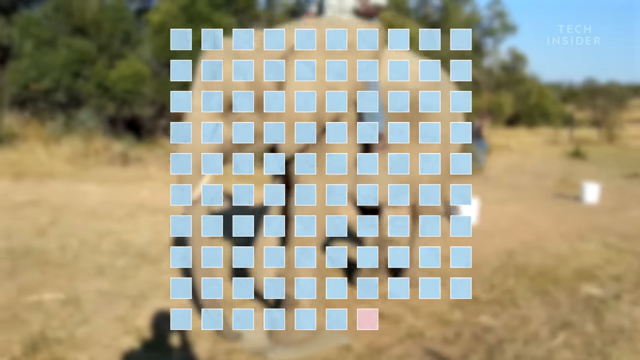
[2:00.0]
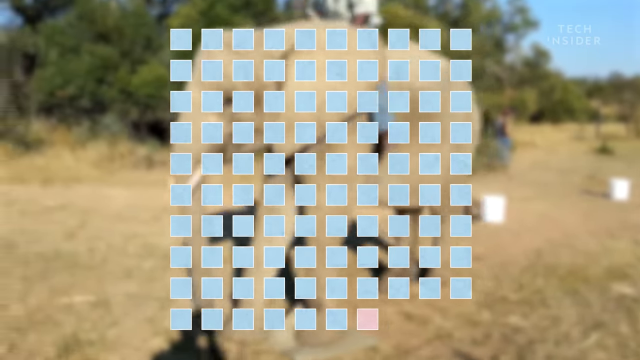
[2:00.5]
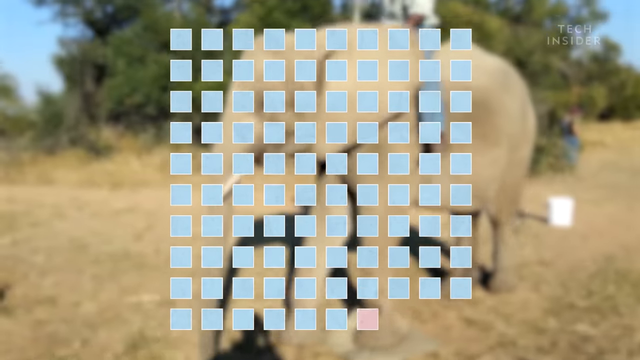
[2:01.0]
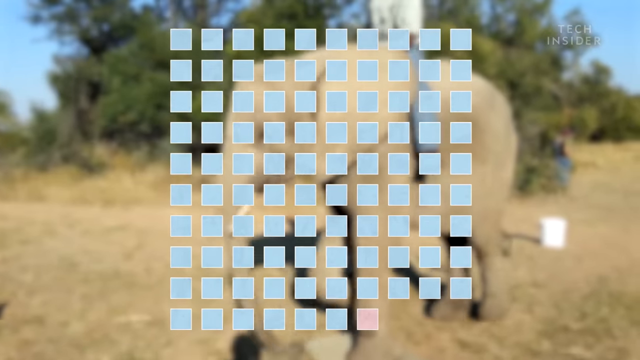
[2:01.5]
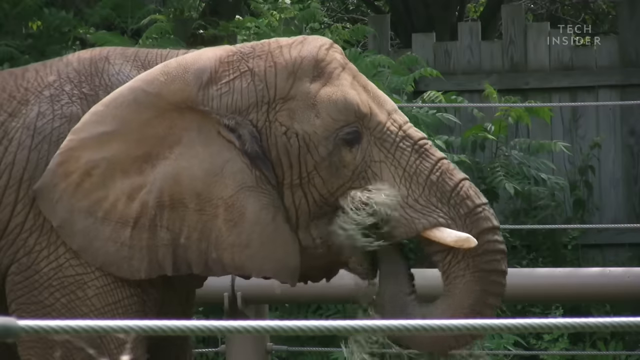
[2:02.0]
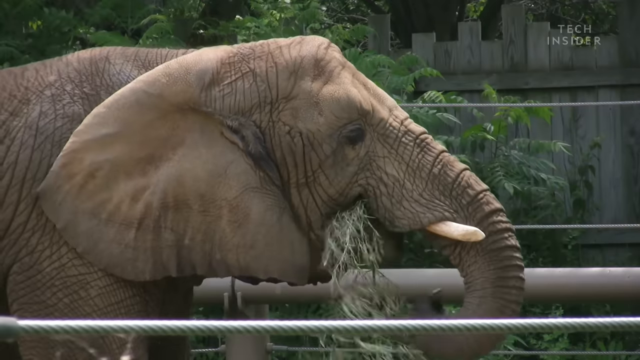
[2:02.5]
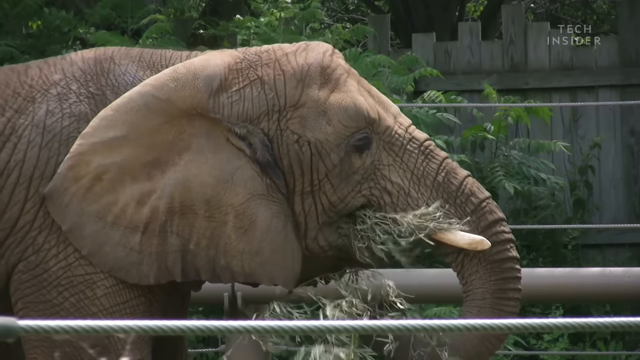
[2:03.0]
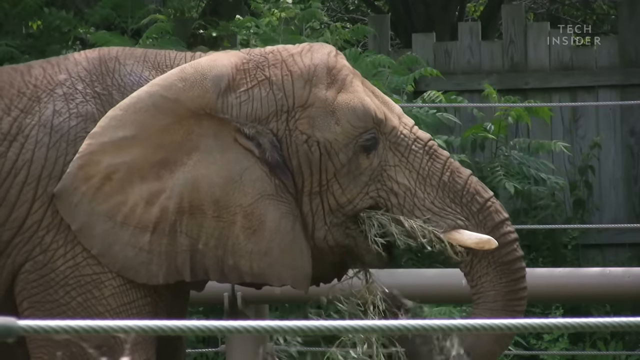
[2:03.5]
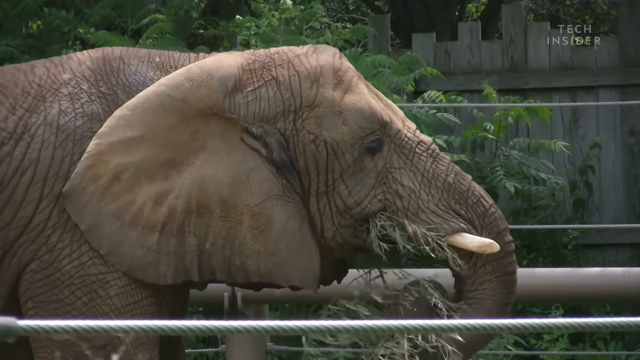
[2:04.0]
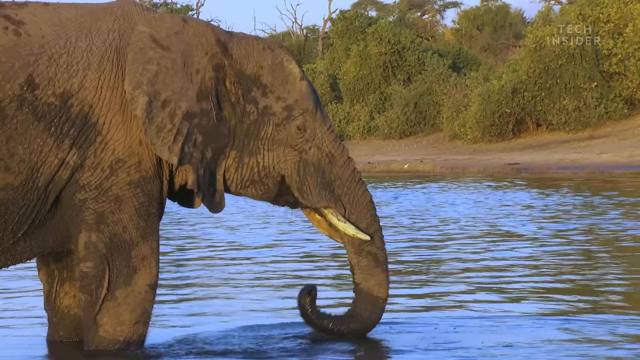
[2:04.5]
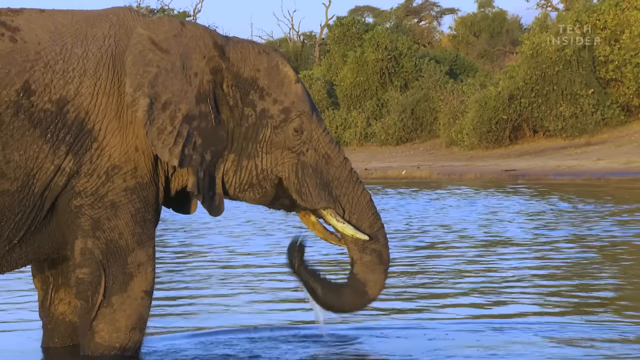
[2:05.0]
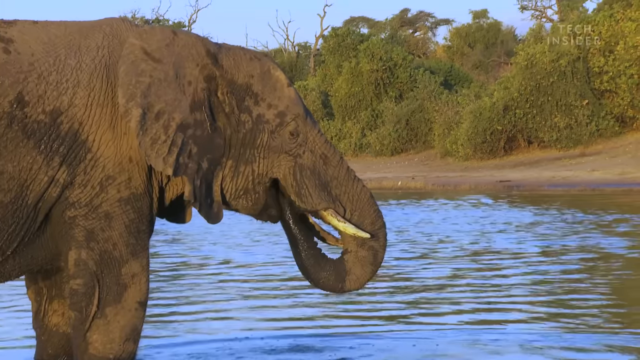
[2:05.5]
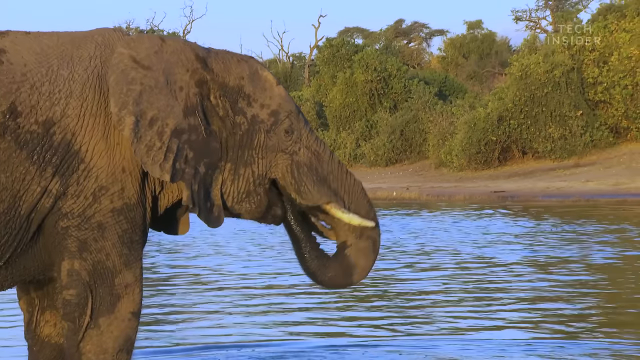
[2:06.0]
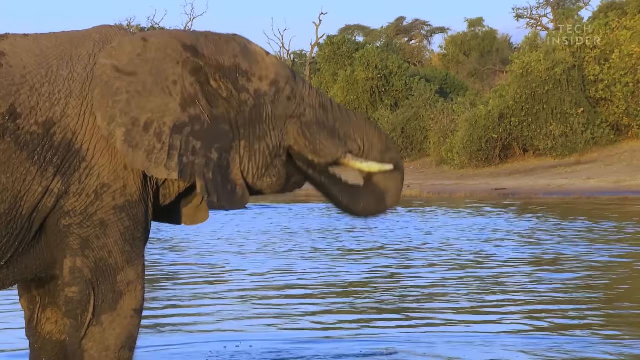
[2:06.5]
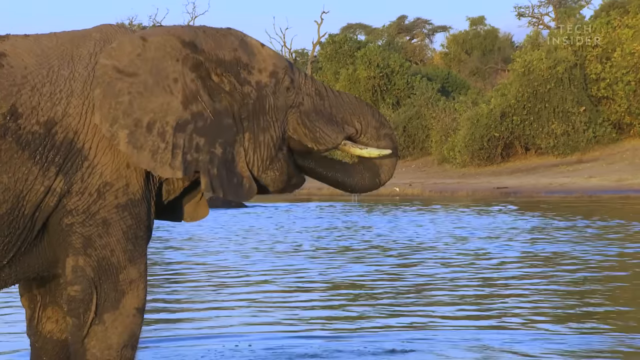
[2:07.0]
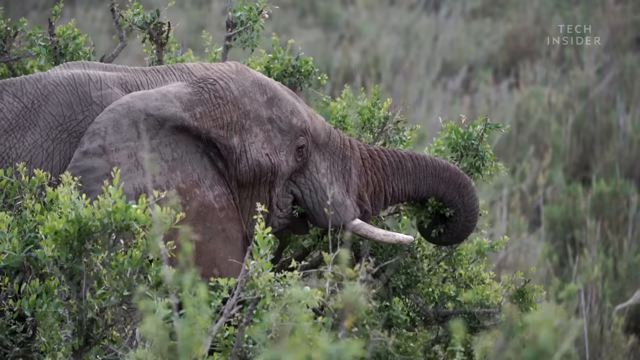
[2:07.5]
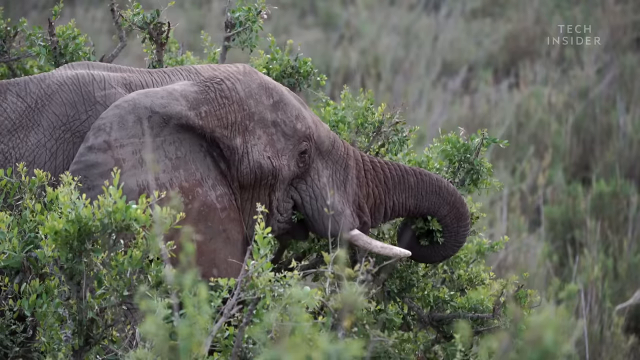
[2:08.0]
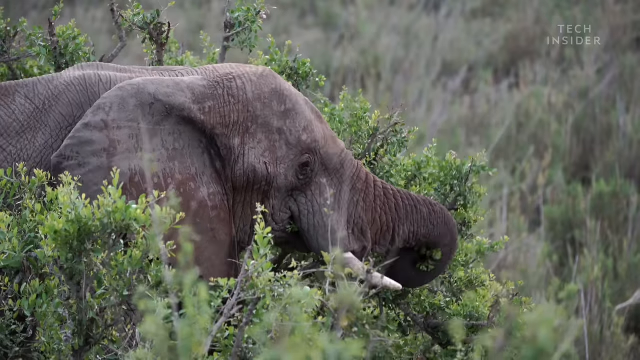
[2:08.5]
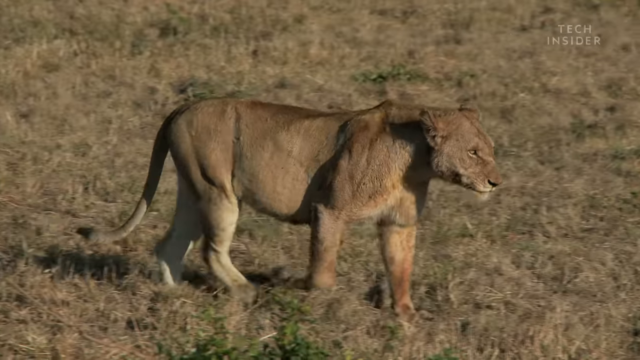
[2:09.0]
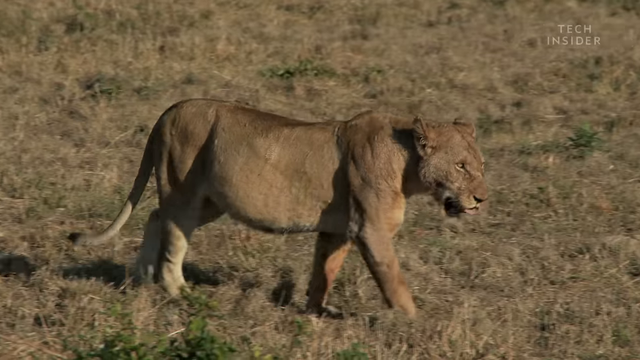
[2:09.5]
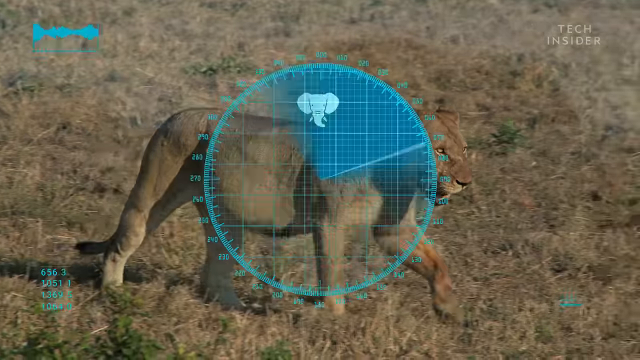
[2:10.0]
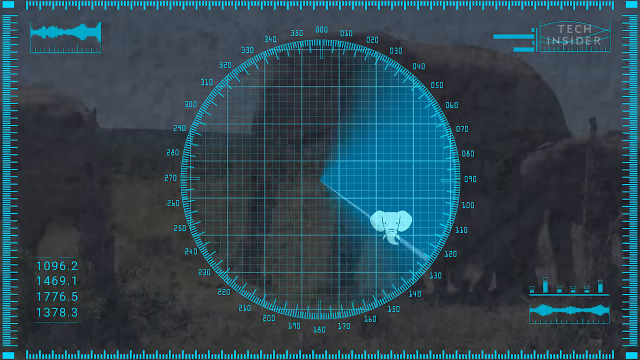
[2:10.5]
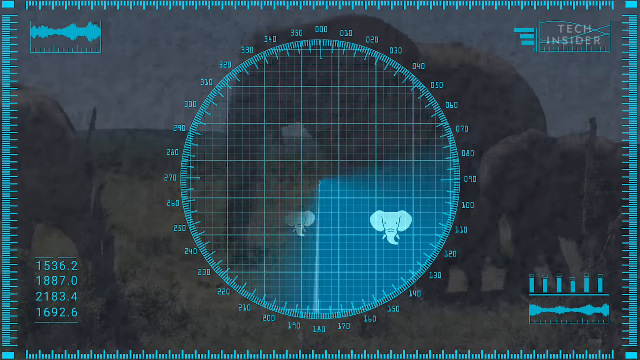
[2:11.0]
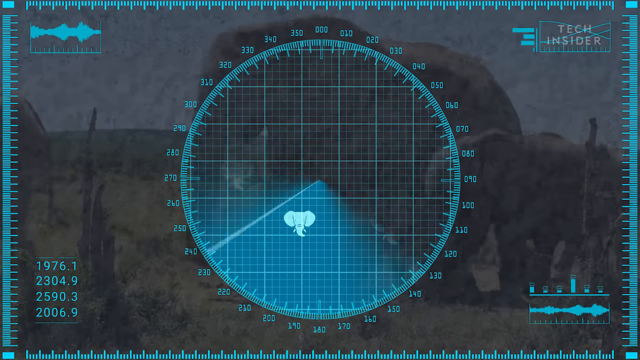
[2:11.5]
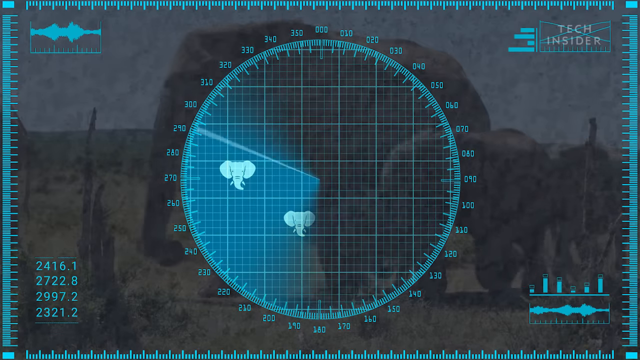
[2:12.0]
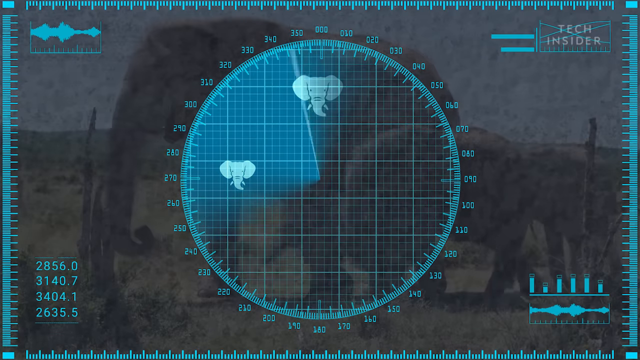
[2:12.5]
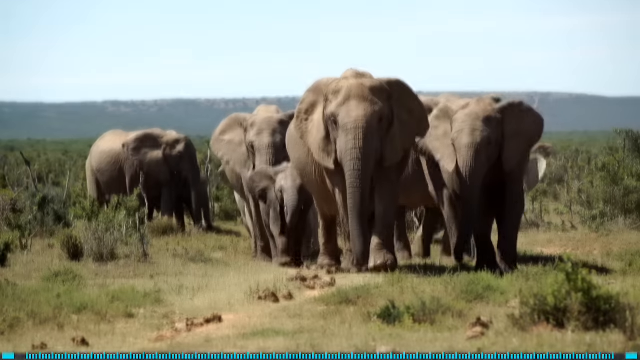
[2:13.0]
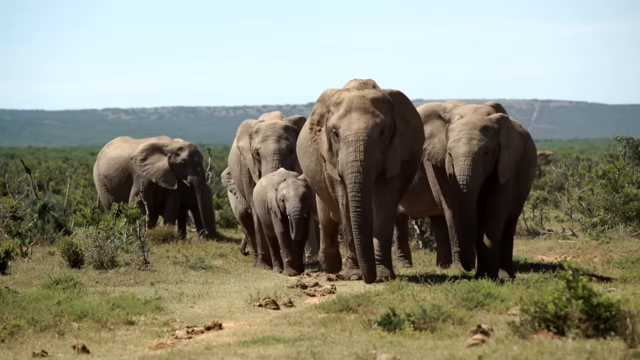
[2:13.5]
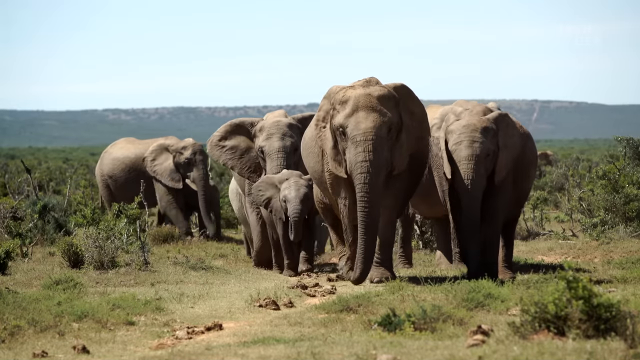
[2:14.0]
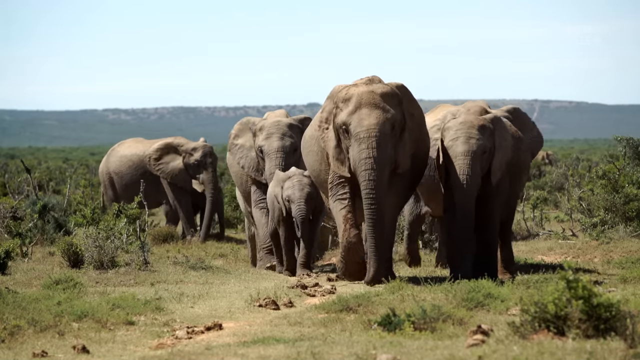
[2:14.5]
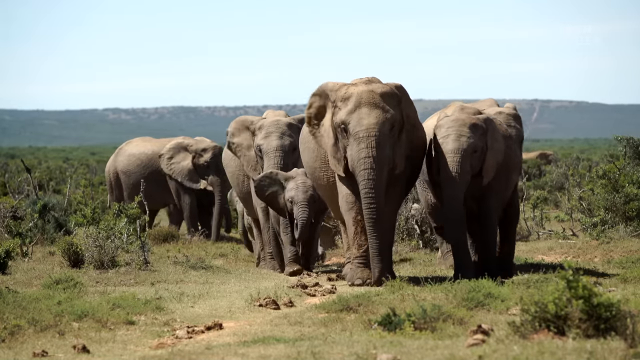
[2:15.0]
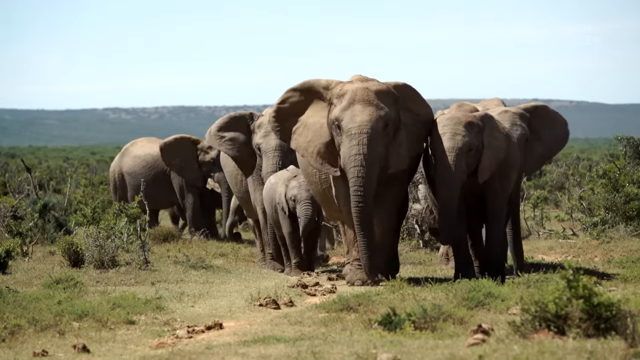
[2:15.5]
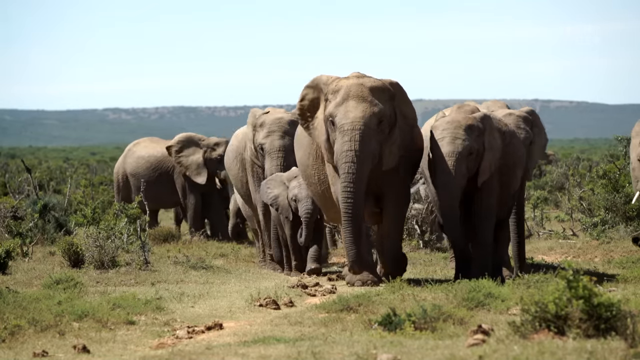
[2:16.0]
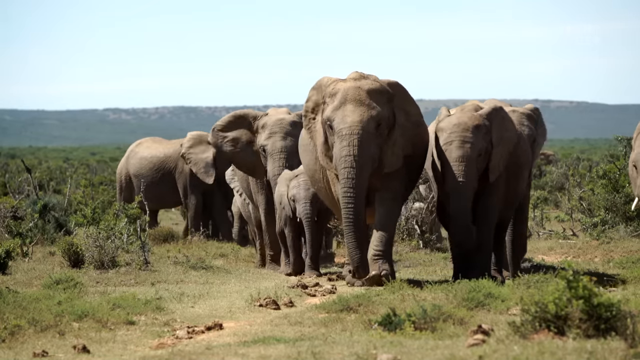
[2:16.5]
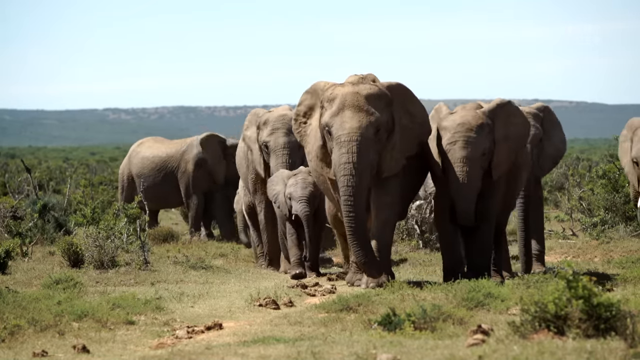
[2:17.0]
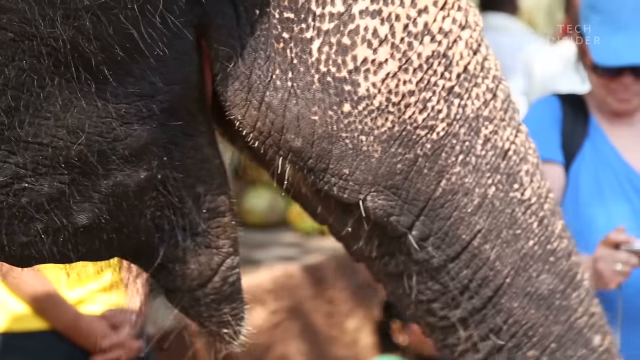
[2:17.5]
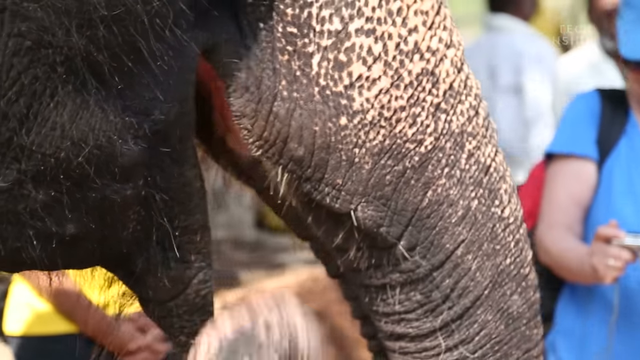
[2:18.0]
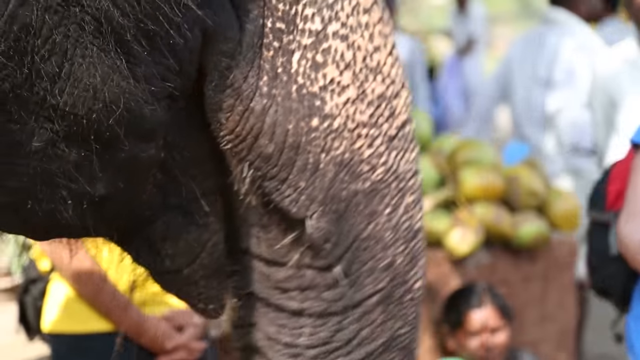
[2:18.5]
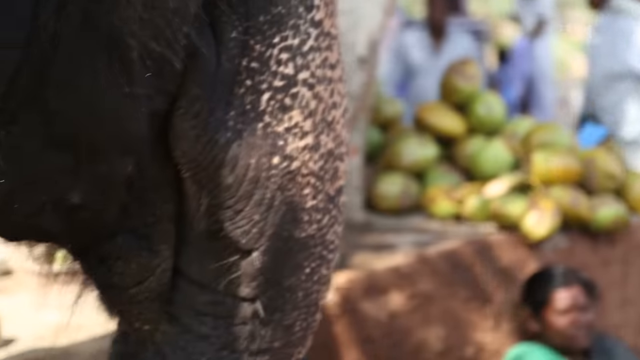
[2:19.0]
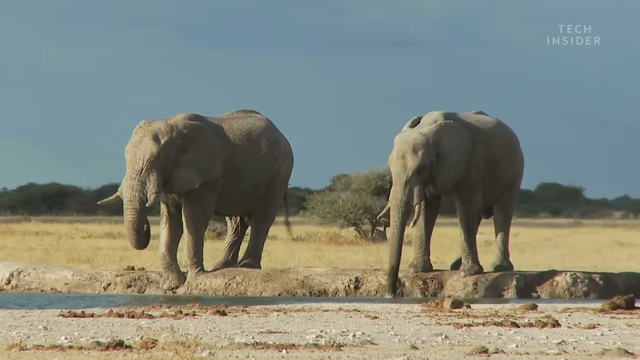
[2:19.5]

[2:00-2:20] An elephant eats some leaves. Another elephant, apparently drinking, is in very shallow-seeming water in a savannah kind of setting with large green vegetation behind it. Another elephant appears, then a lioness walks slowly across the savannah. A digital display shows something almost like a radar that scans, with elephant faces appearing; there are all sorts of numbers in the bottom left and some graphs, and it looks very technical. Then the natural setting returns with a herd of elephants walking together, including at least one small baby elephant. A close-up of an elephant trunk follows, and two elephants appear at the end.